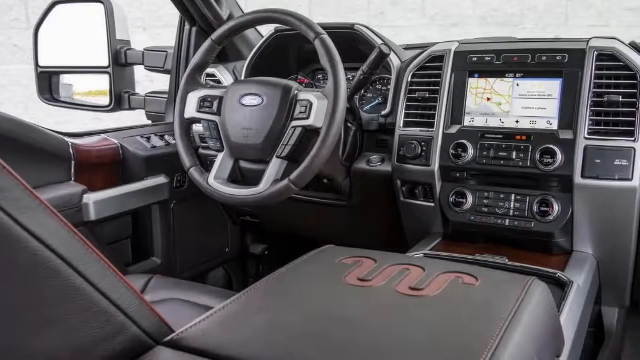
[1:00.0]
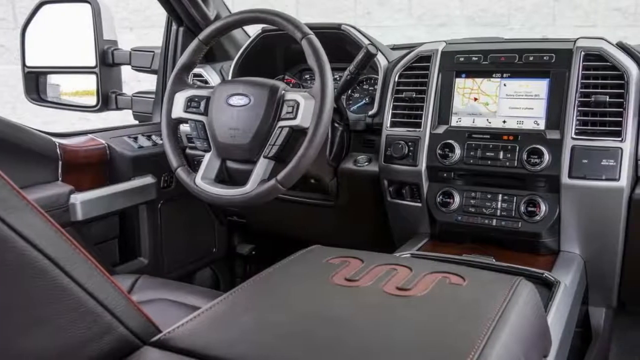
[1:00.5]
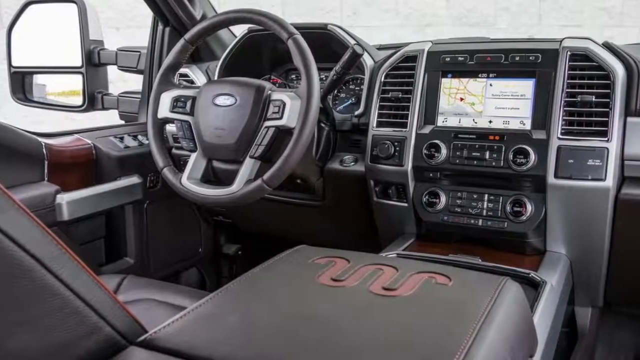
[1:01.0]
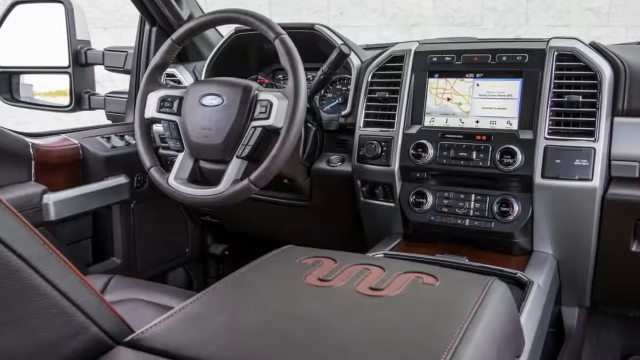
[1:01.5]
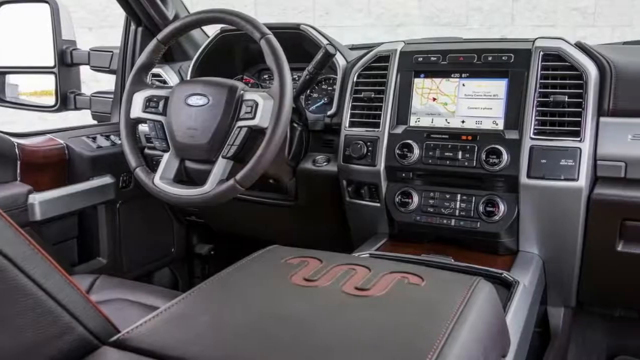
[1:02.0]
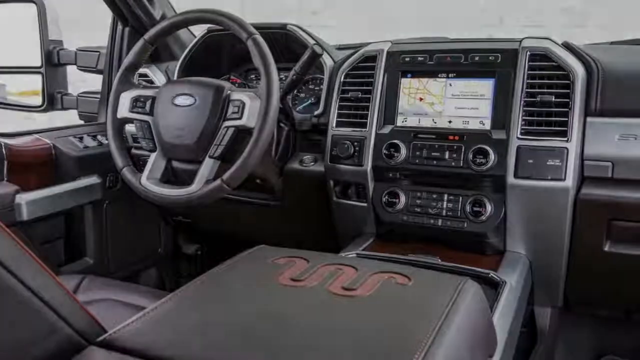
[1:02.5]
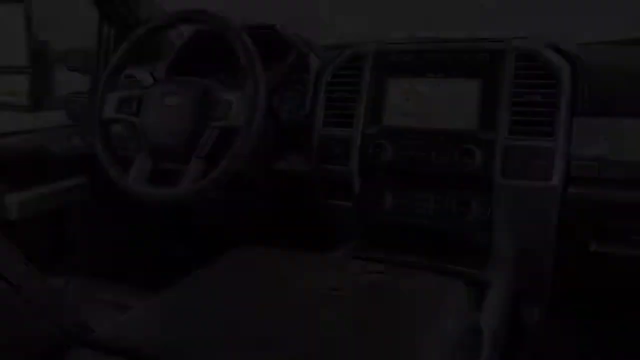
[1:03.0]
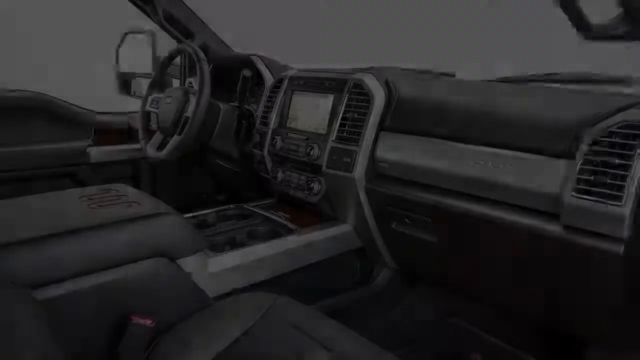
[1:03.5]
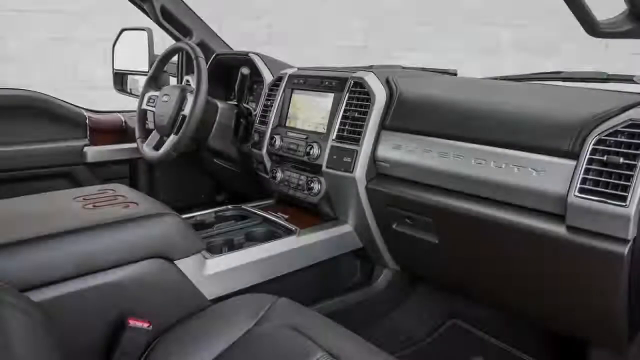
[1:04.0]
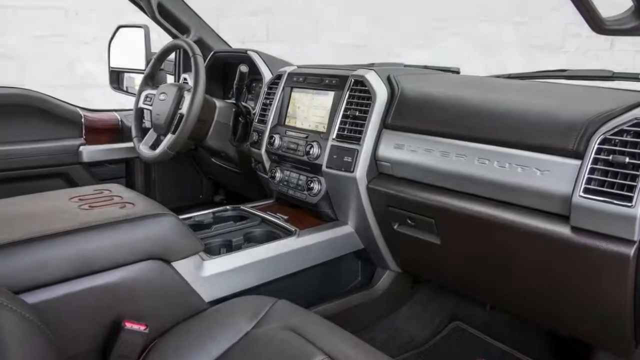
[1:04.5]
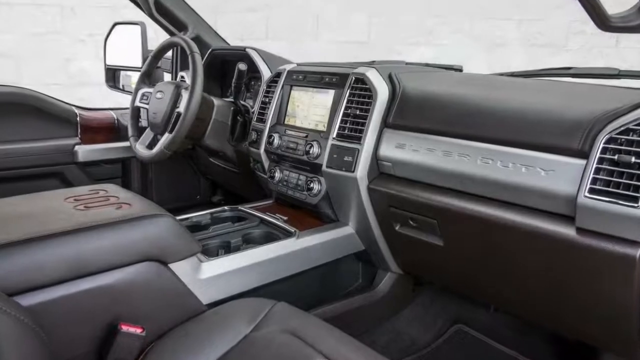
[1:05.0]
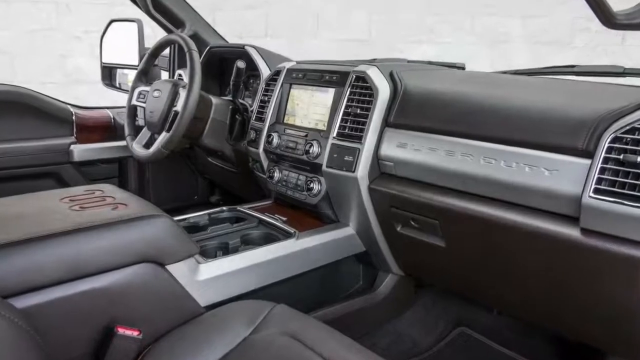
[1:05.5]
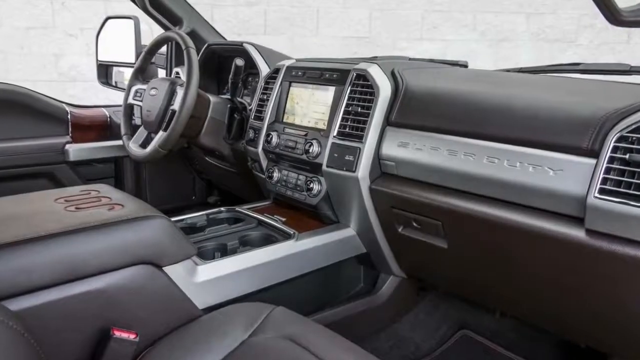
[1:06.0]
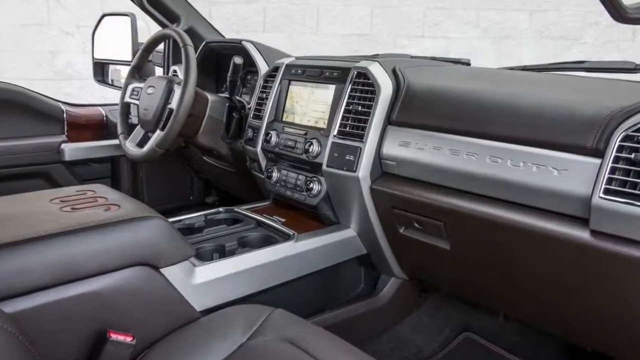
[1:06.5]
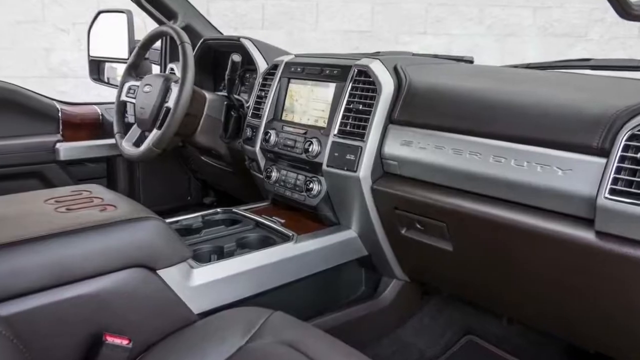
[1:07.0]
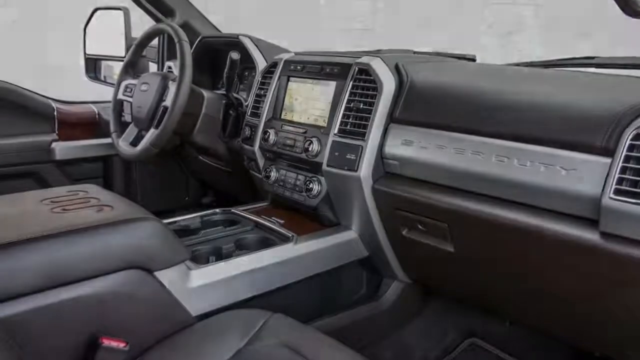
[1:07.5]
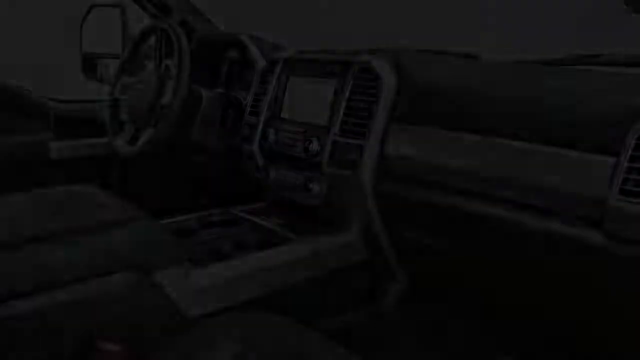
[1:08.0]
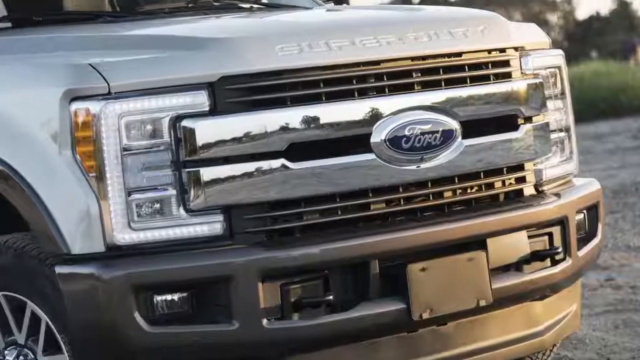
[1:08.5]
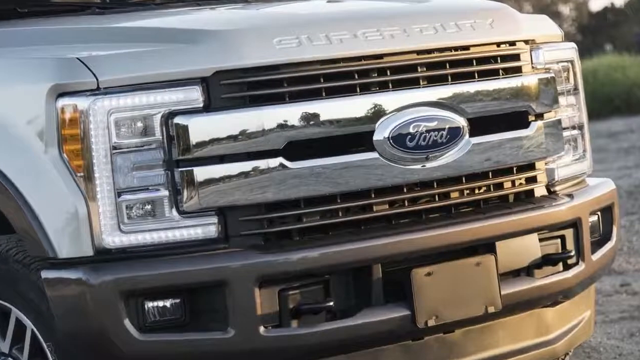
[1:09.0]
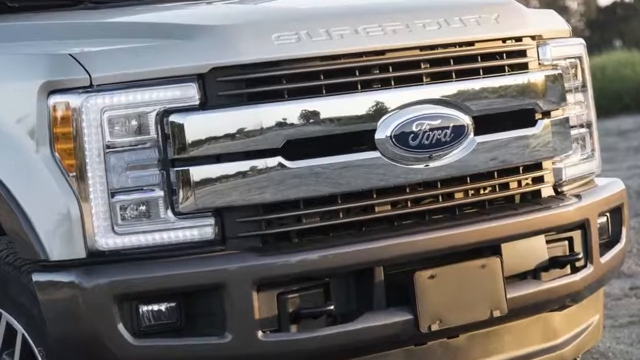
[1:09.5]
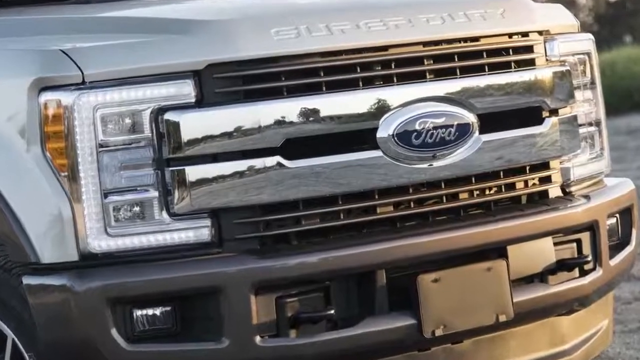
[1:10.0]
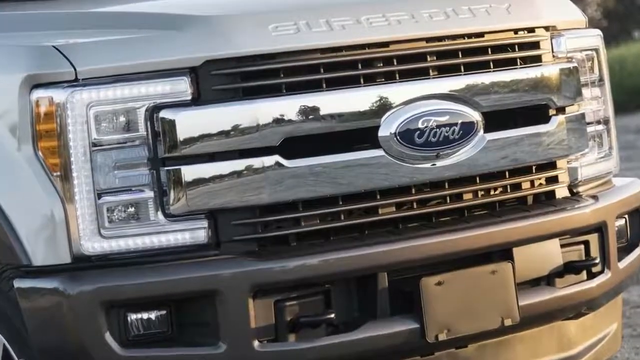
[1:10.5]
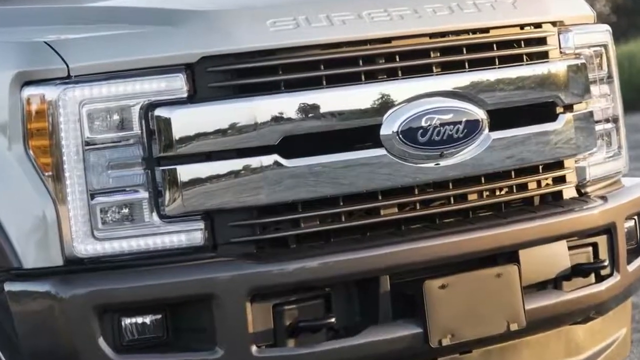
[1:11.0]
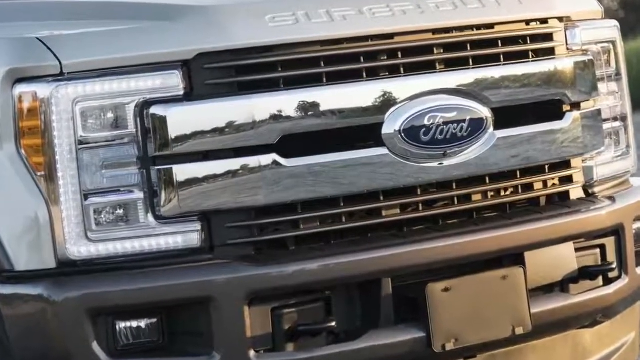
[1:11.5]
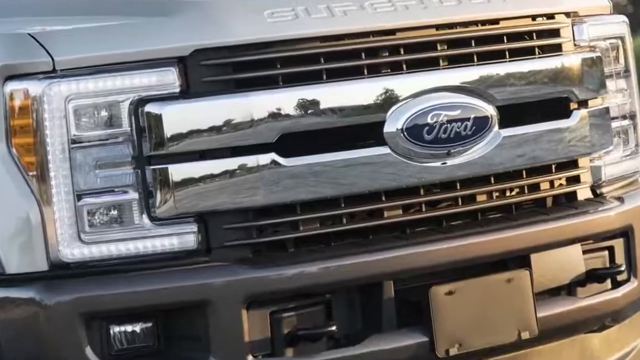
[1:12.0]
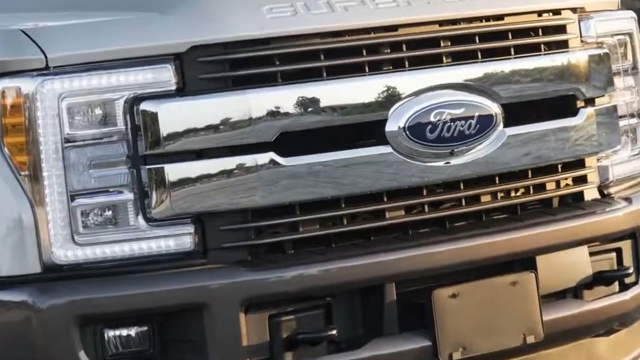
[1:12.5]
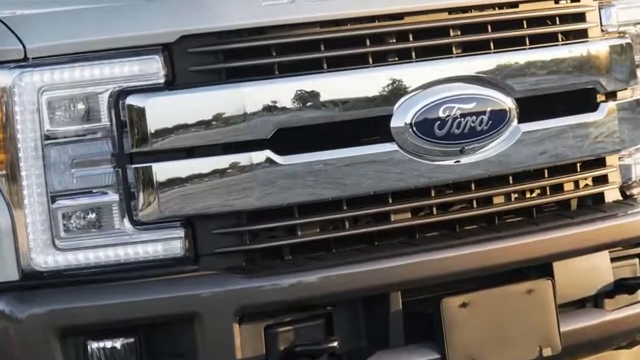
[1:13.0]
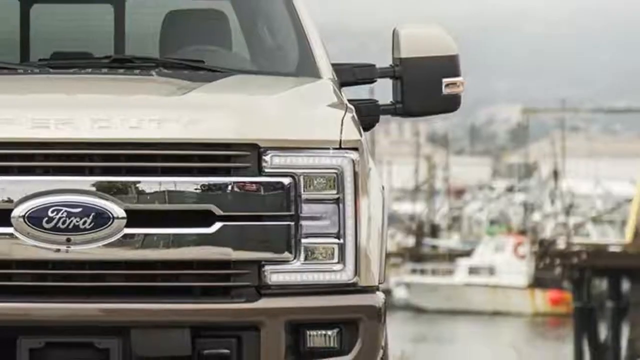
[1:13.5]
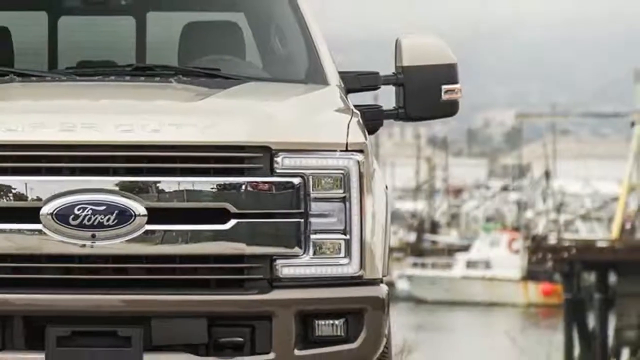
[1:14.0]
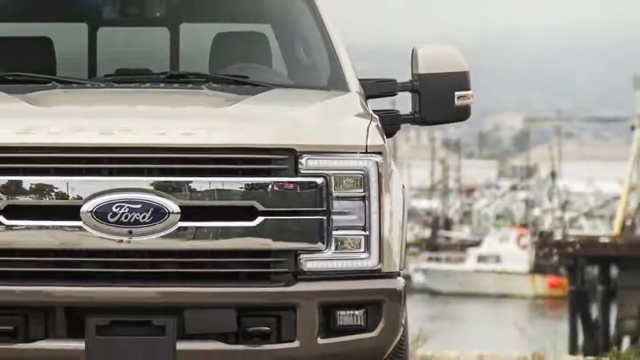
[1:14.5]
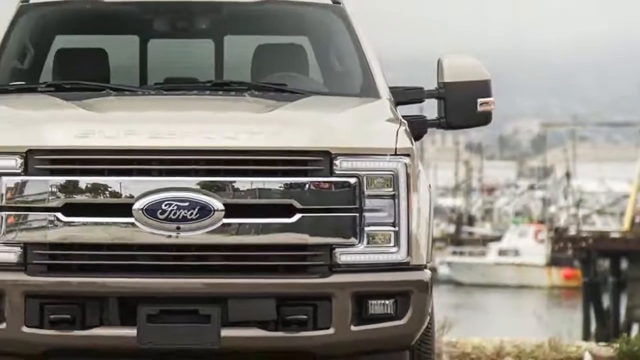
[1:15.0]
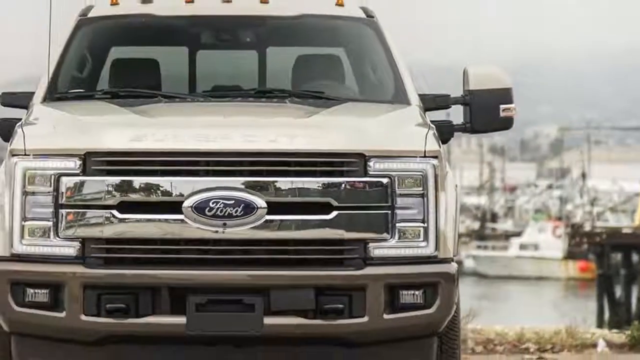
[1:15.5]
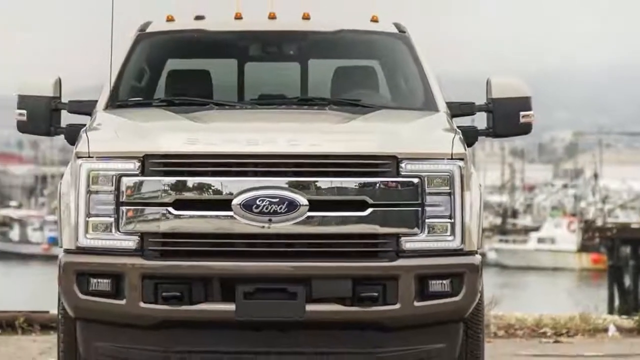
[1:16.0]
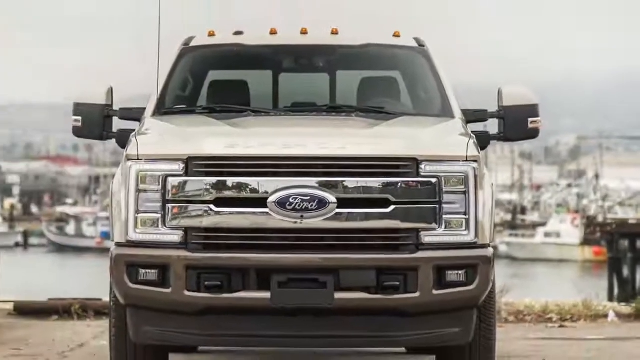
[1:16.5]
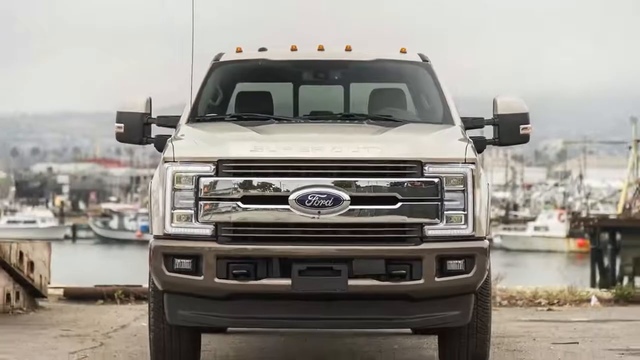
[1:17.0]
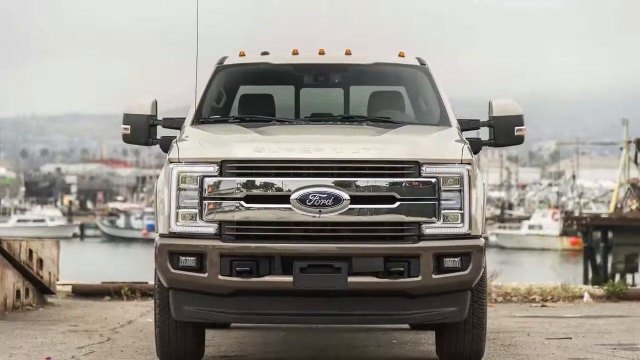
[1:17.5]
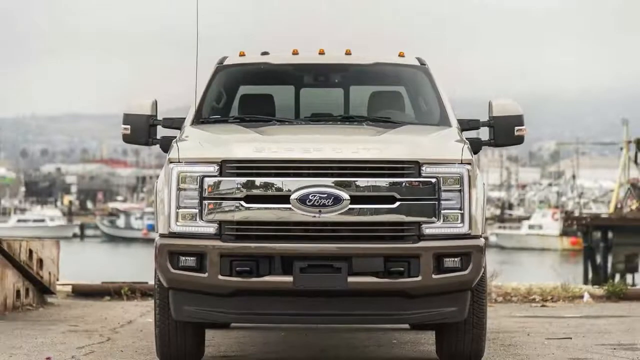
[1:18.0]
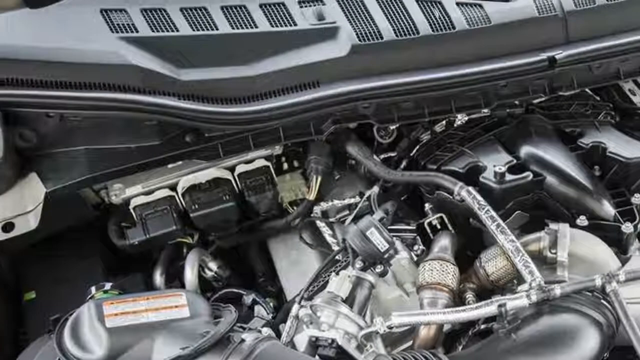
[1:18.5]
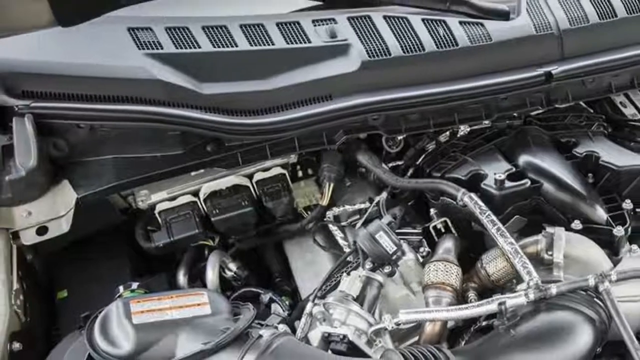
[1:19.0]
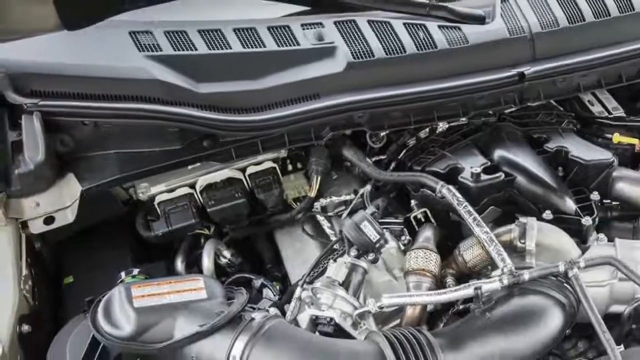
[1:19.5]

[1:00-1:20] From the passenger-side view, the image scrolls very slightly across. A slightly different, more forward view follows with the infotainment system in the centre, and the picture scrolls in toward it. It then wipes to a view of the front of the truck, showing the radiator grille, the embossed Super Duty on the front of the bonnet catch, and the two C-shaped, rectangular light clusters. To the left of the cluster on the passenger side there is also an orange-coloured light cluster. There is a silver effect of two rectangular silver bars with a gap in the middle, and the word Ford on a blue oval in the middle of the radiator grille. A black plastic bumper is below the radiator grille. Next comes a driver's-side front view of the vehicle showing a black wing mirror attached to the side of the vehicle by two supports, with a small orange indicator light on the black upper quarter of the mirror; the rear of the mirror is the same colour as the vehicle. Behind it are blurred images of boats as the view zooms out and toward the left, ending on a full shot of the front of the vehicle in front of the boats. It then cuts to a picture of what is seen when the bonnet is lifted.